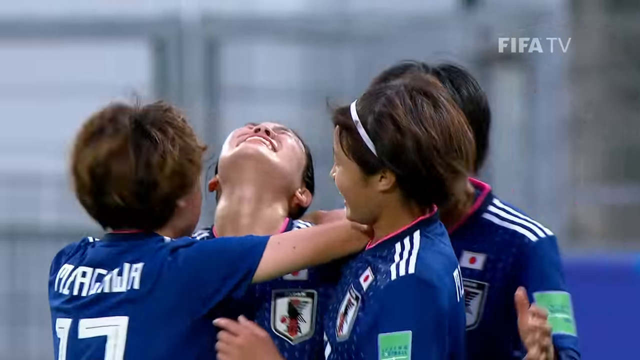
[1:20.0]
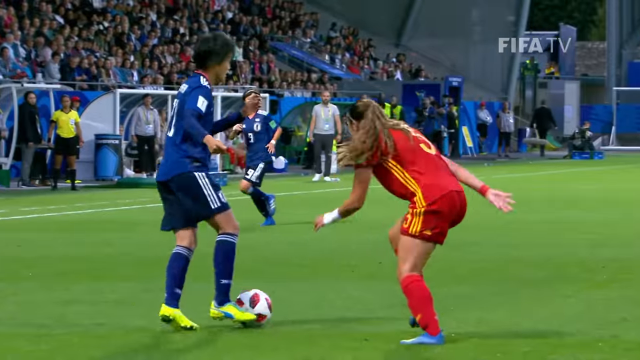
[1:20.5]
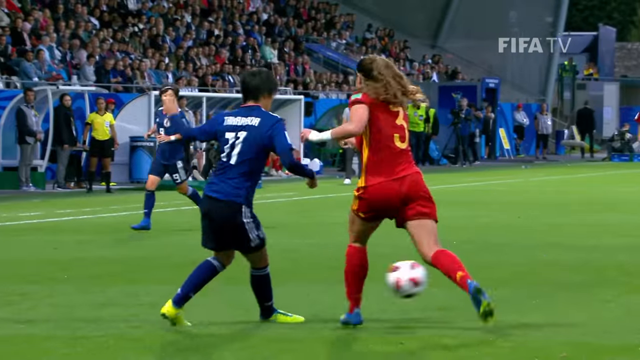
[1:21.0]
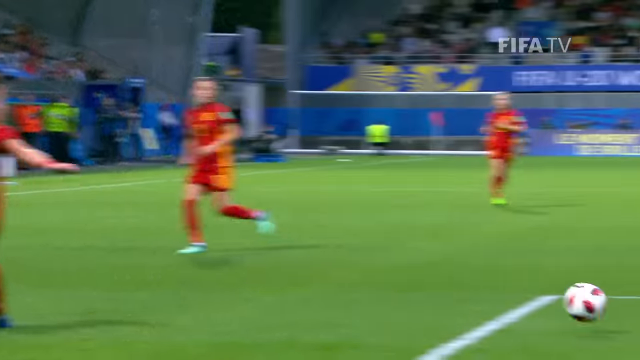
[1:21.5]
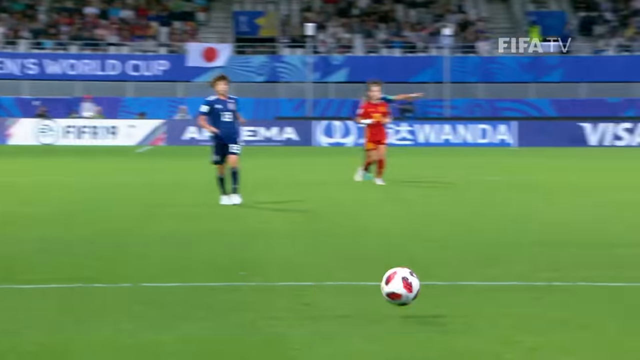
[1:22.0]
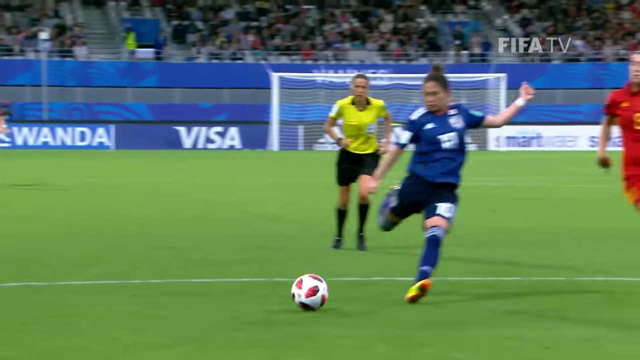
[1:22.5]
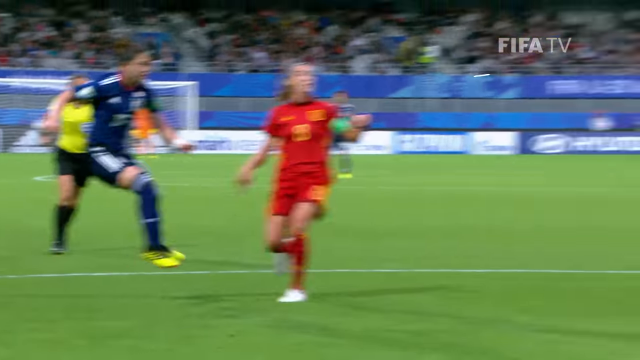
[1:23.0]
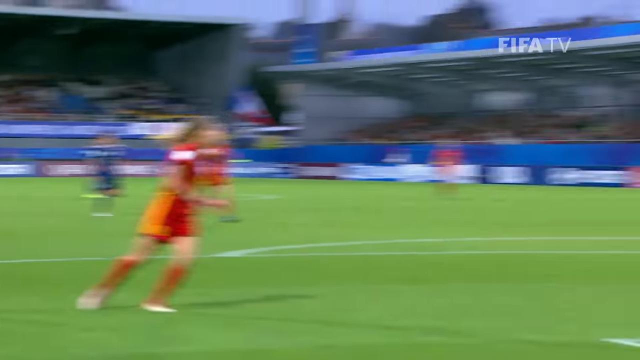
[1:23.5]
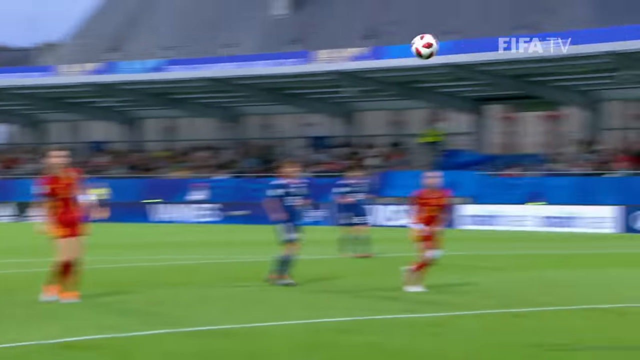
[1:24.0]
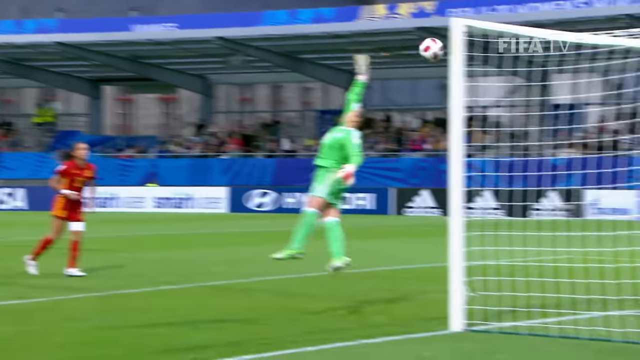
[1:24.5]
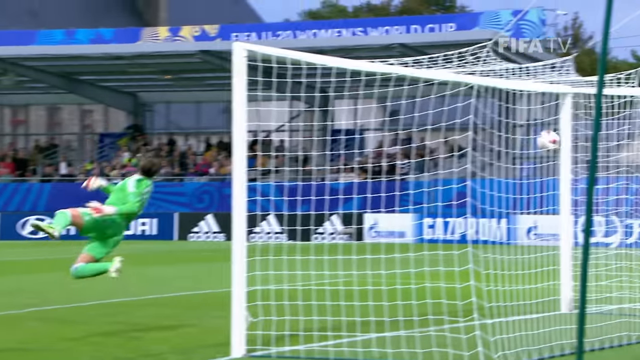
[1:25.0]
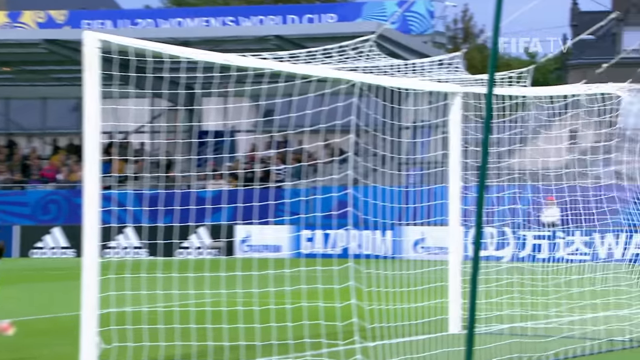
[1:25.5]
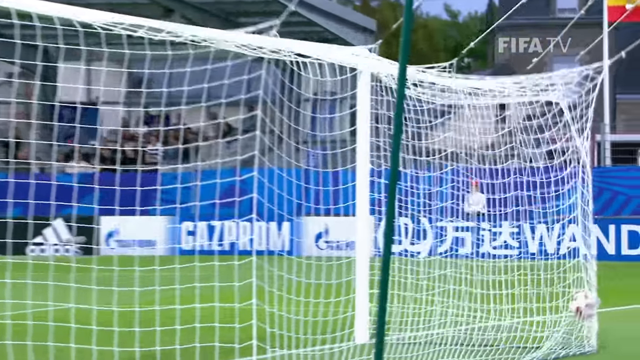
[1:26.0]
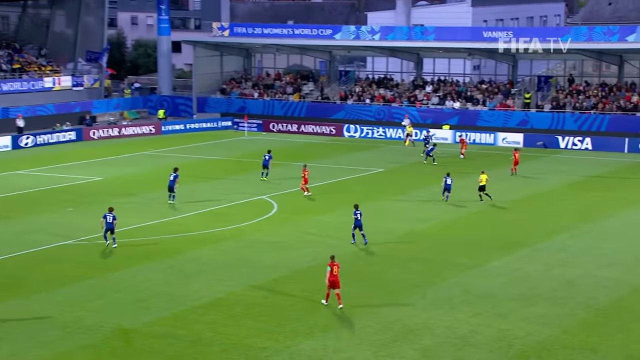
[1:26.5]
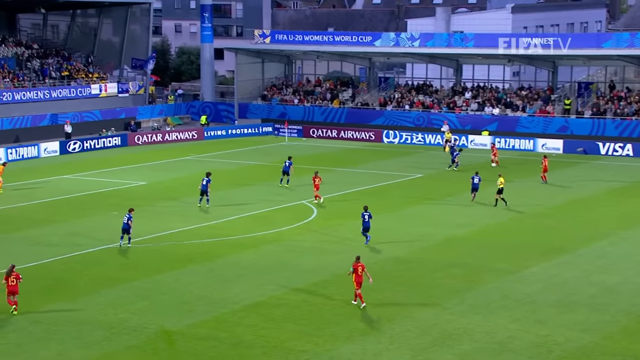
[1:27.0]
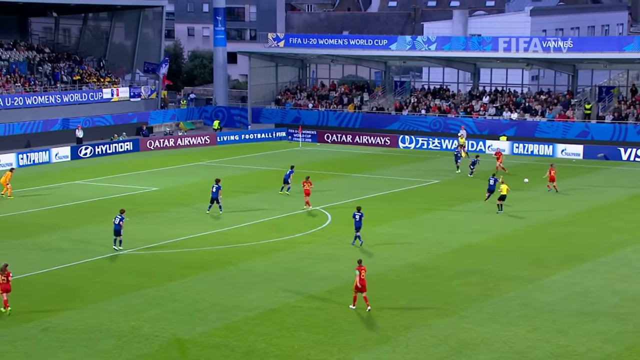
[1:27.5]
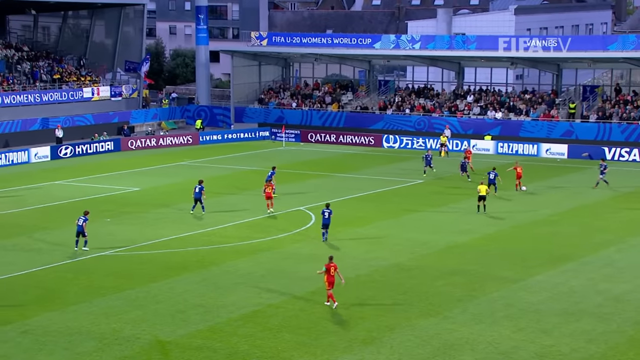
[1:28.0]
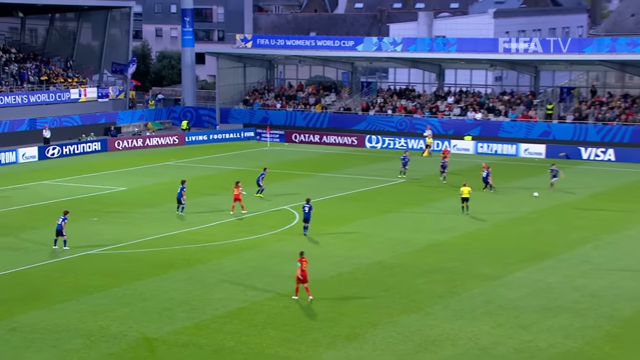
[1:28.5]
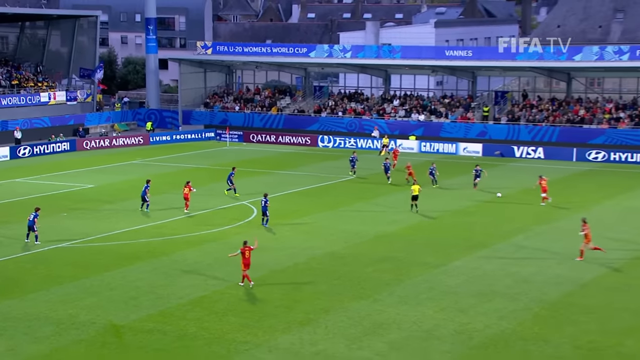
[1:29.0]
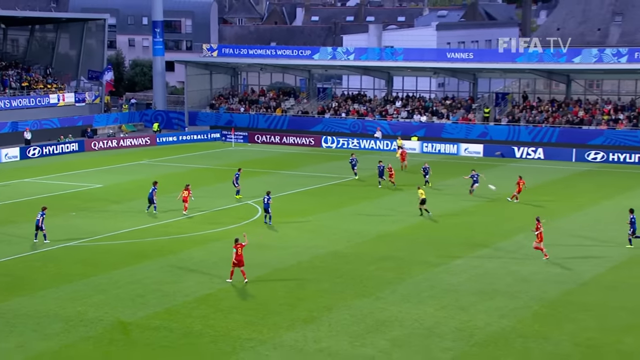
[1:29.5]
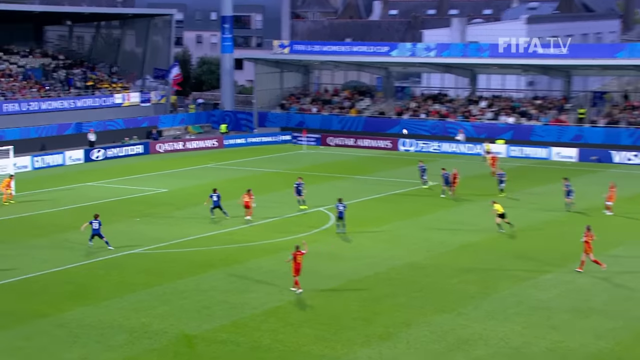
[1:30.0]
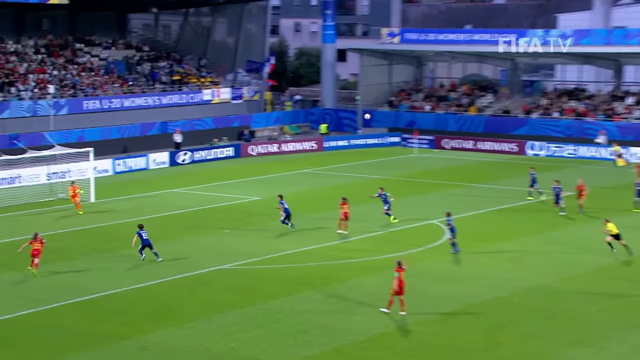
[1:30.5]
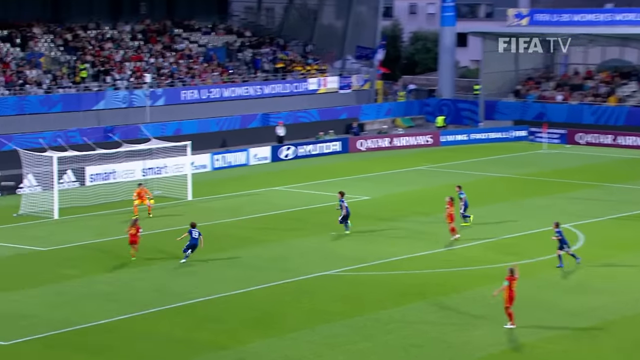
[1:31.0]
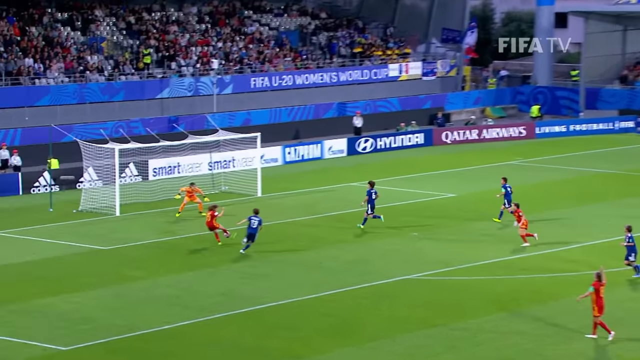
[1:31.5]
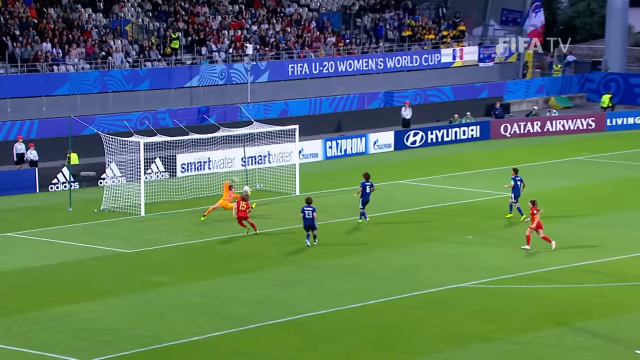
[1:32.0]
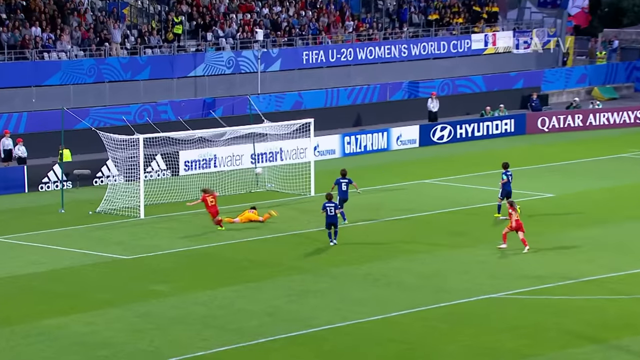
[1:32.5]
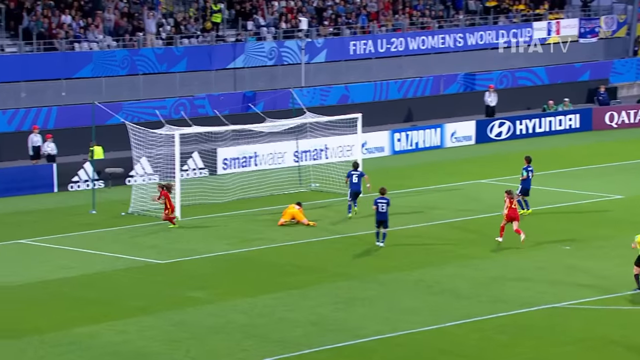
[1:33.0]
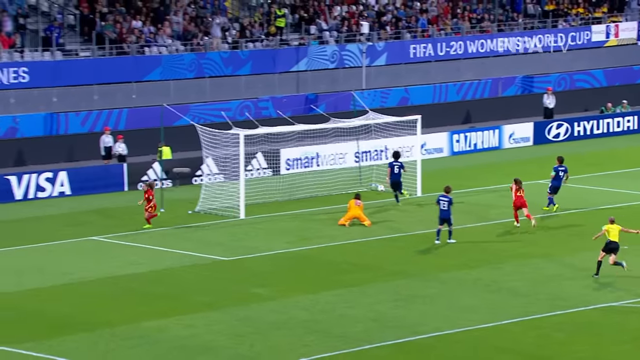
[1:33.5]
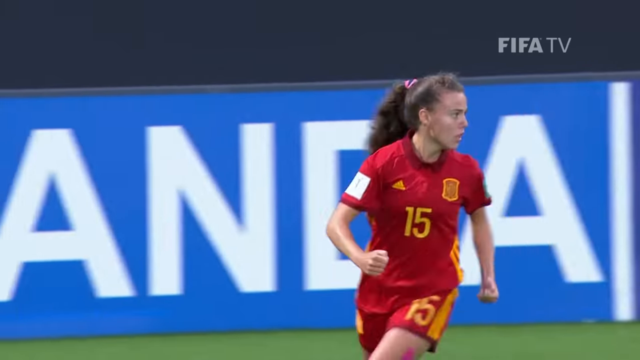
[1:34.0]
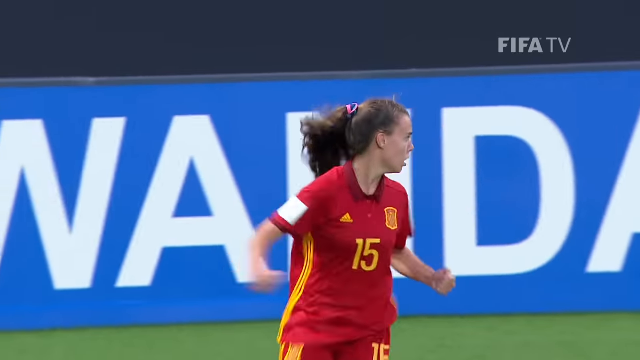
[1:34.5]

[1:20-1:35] From the 2018 FIFA Women's World Cup, Spain versus Japan. The video opens with both teams walking out, smiling, then cuts to a man in the stands who is apparently important, and then concentrates on the action. There are many slow-motion shots of the goals scored, the kickers, how they kick and how happy they are. Now and then it cuts to an umpire making a ruling. The stadium is mostly blue, rather small and typical, with a lot of ads along the border walls by the seats. There are four goals: Japan has three and Spain one. The Japanese play in blue uniforms and the Spanish in red. The last scene is the Japanese team standing together, jumping up and down, with confetti coming out of the sky.